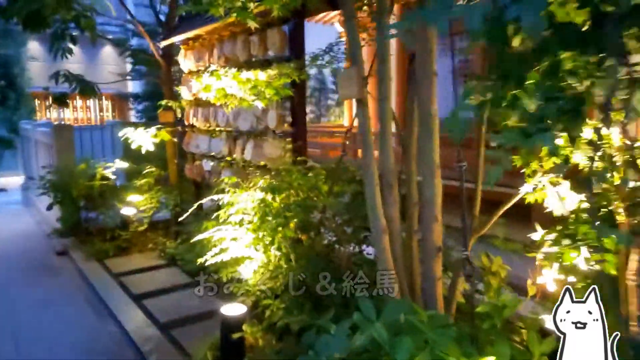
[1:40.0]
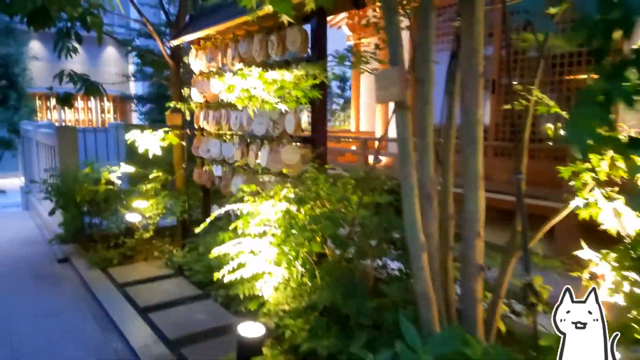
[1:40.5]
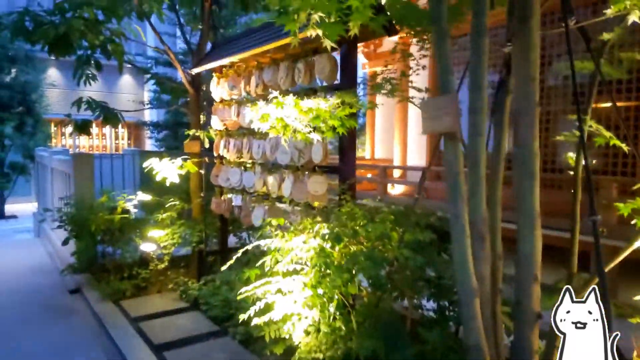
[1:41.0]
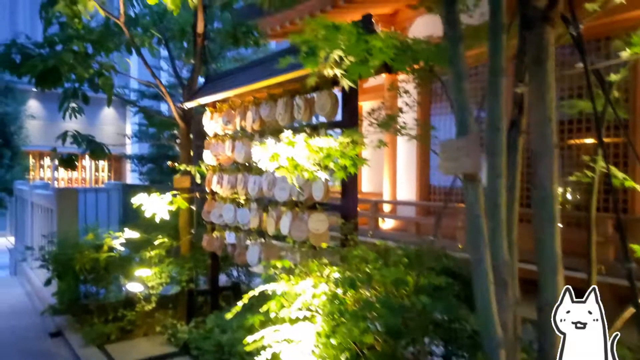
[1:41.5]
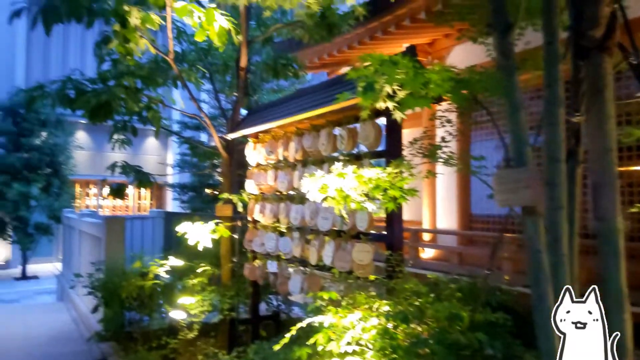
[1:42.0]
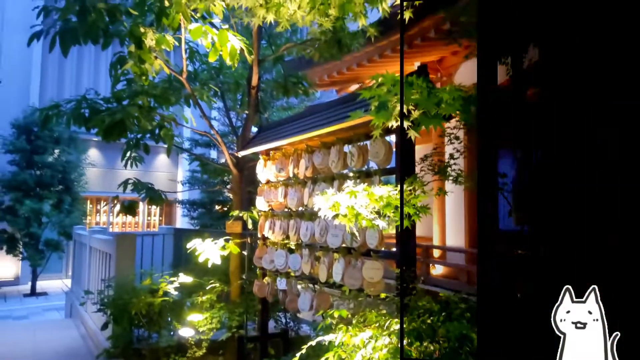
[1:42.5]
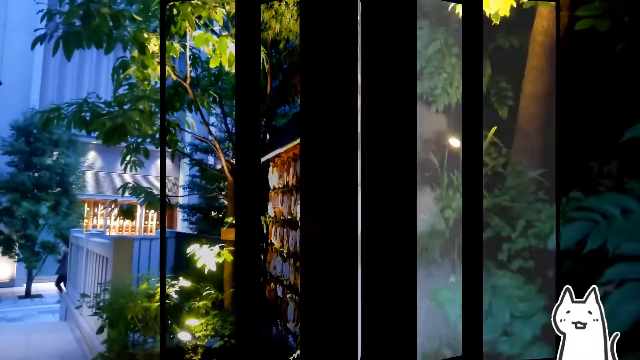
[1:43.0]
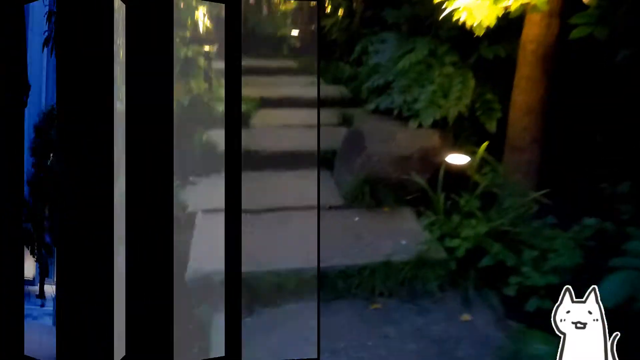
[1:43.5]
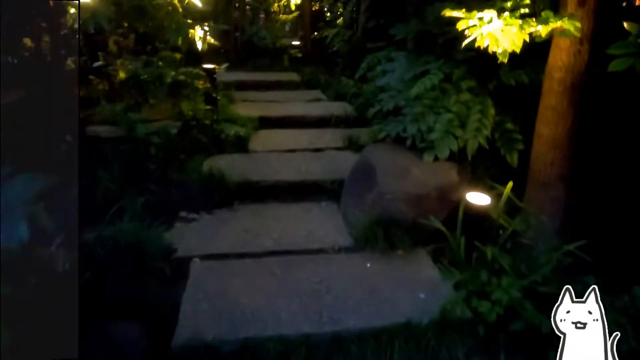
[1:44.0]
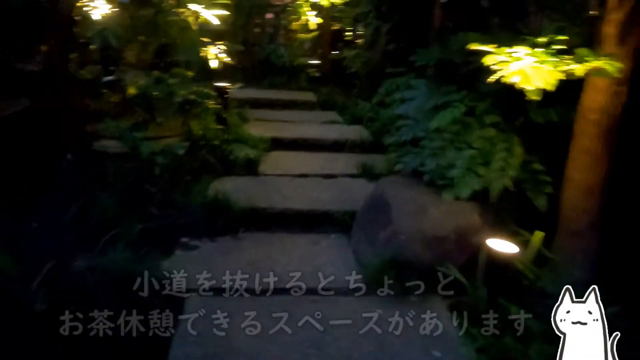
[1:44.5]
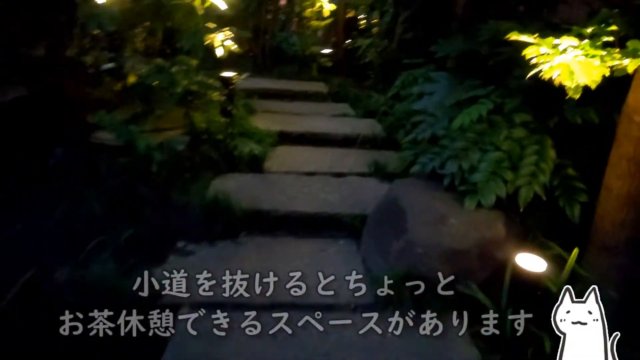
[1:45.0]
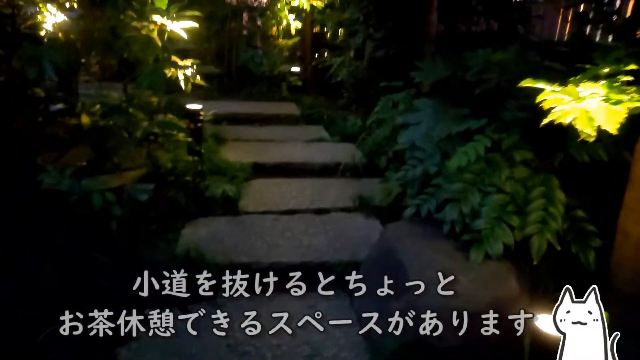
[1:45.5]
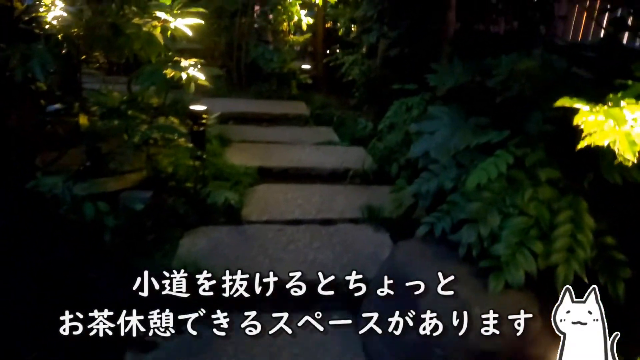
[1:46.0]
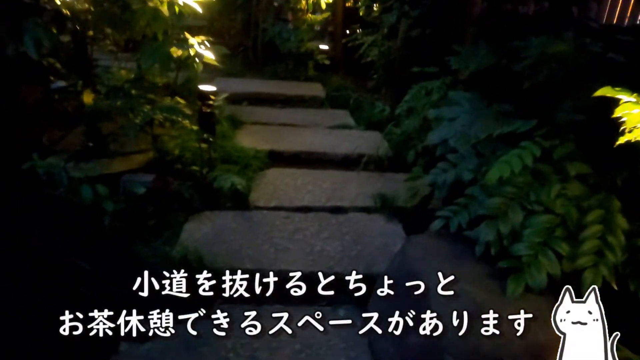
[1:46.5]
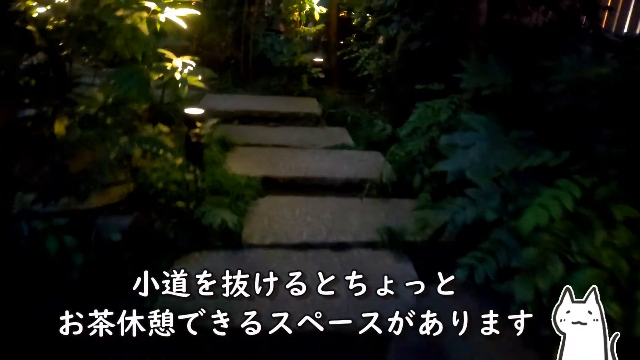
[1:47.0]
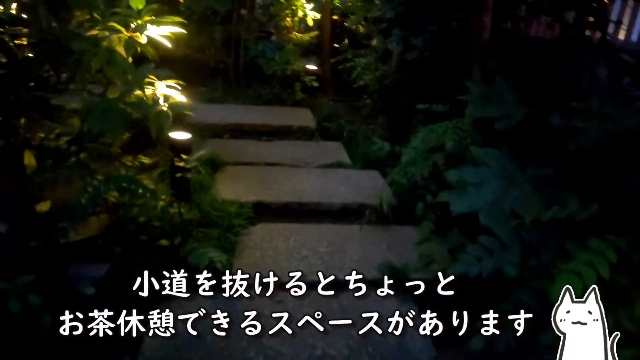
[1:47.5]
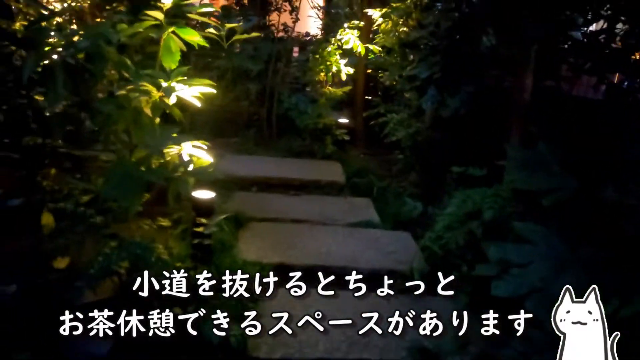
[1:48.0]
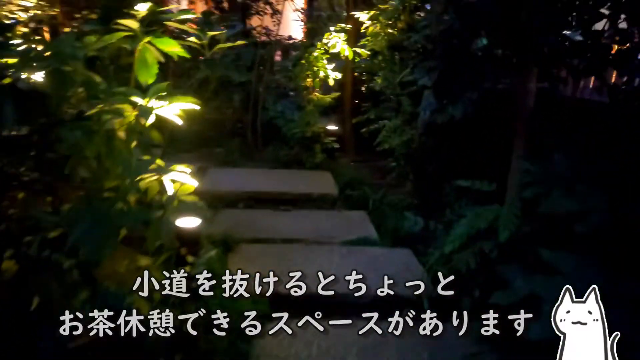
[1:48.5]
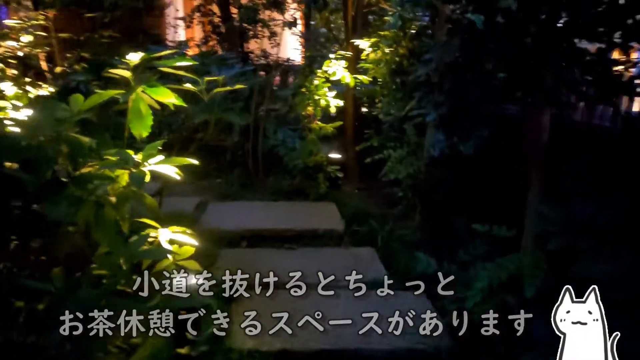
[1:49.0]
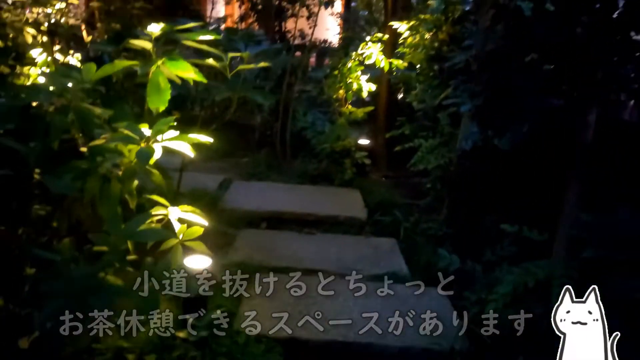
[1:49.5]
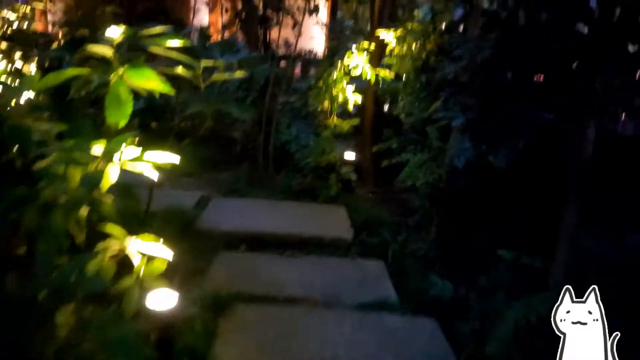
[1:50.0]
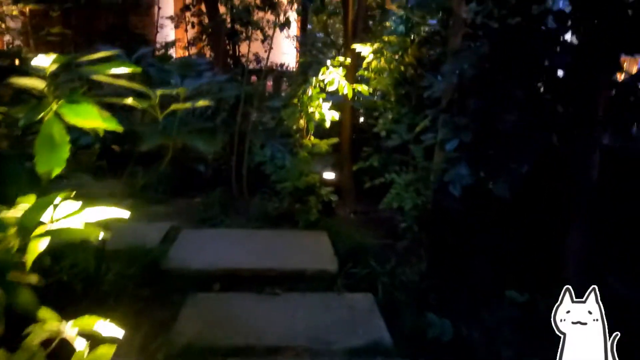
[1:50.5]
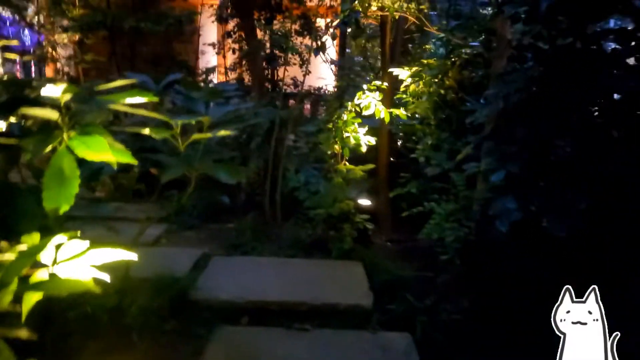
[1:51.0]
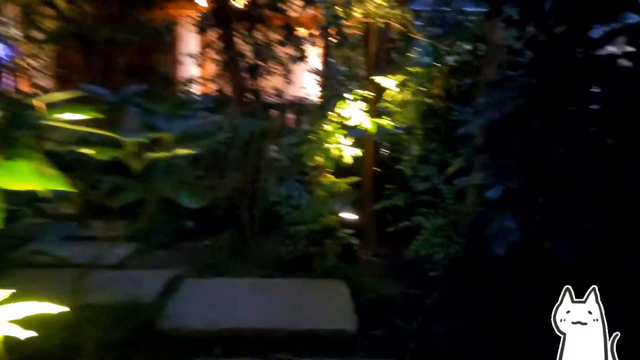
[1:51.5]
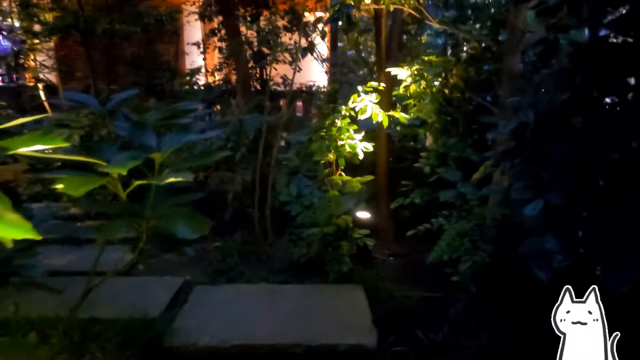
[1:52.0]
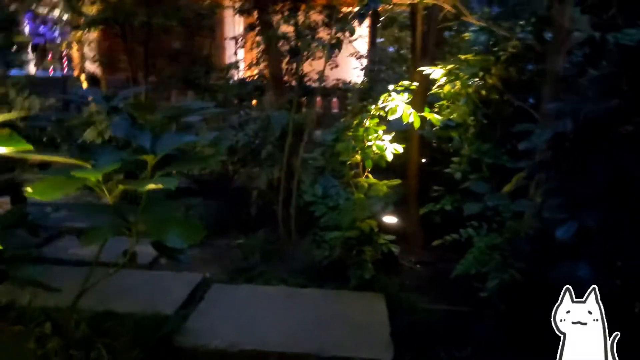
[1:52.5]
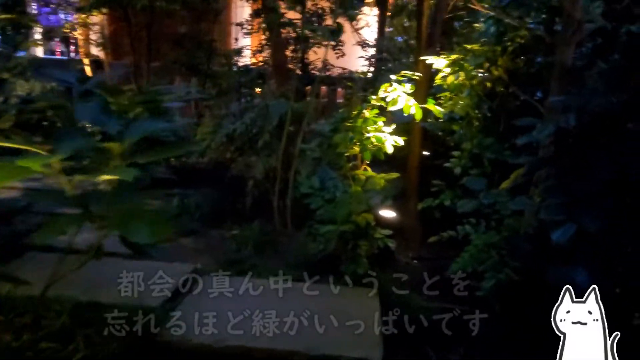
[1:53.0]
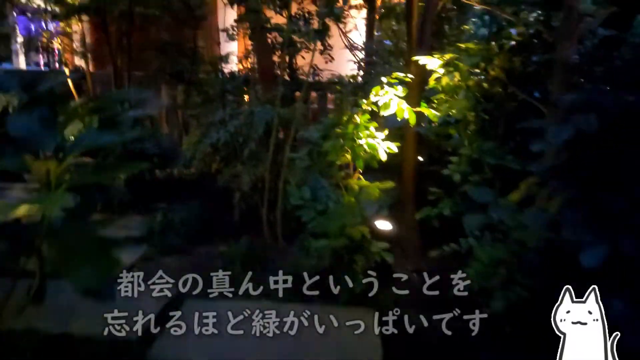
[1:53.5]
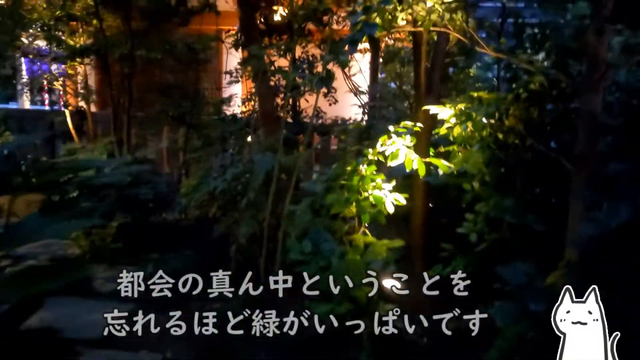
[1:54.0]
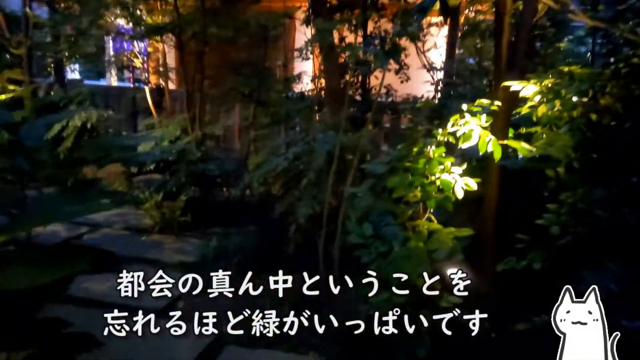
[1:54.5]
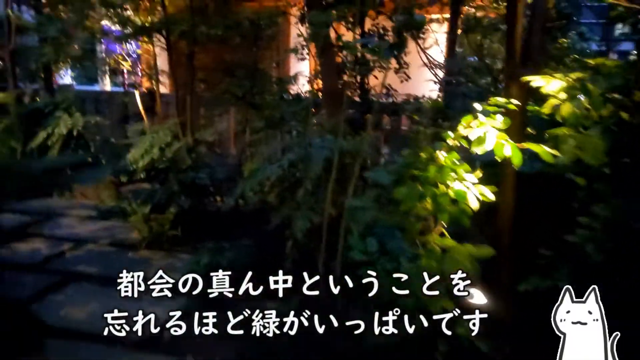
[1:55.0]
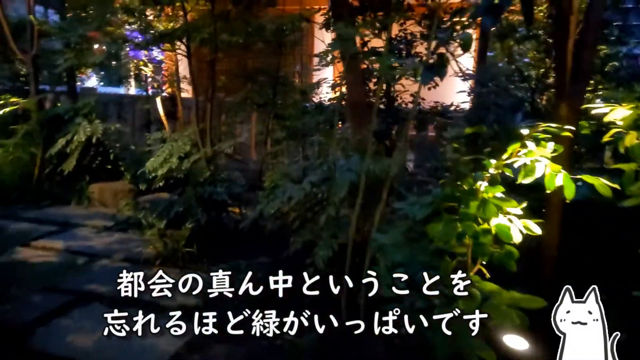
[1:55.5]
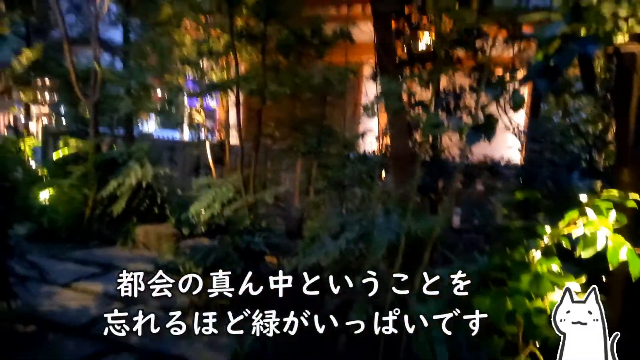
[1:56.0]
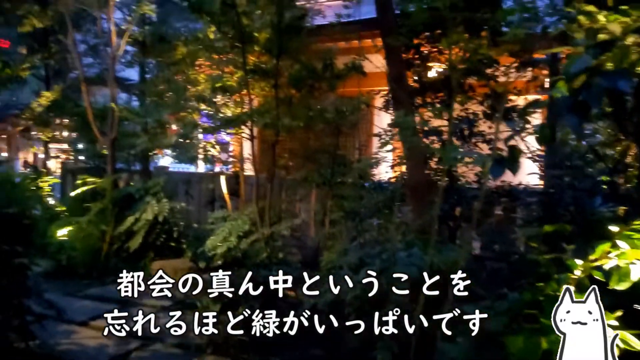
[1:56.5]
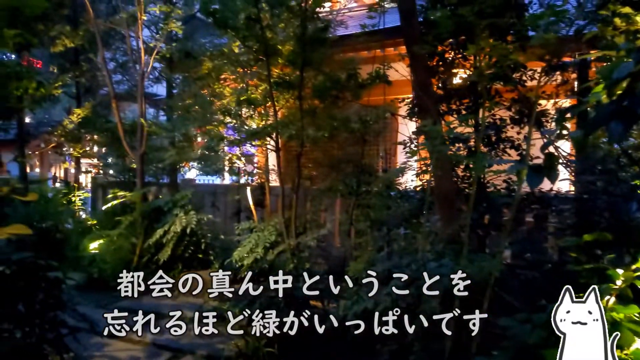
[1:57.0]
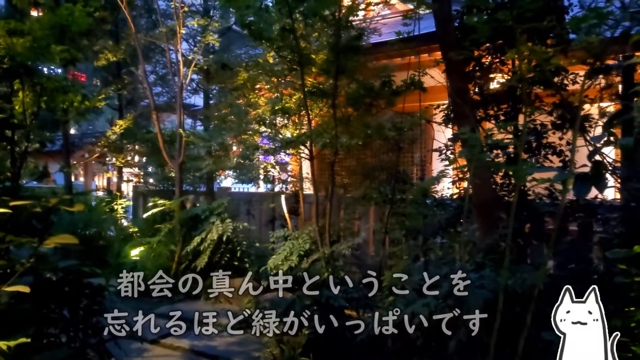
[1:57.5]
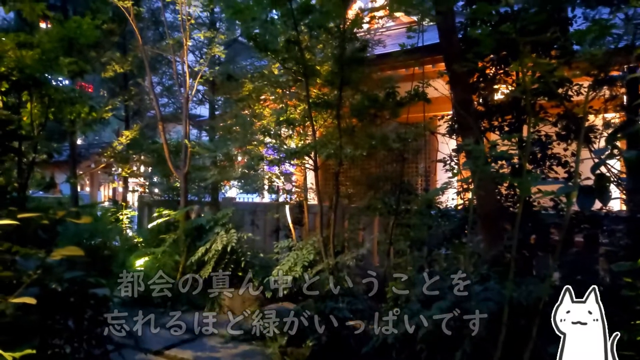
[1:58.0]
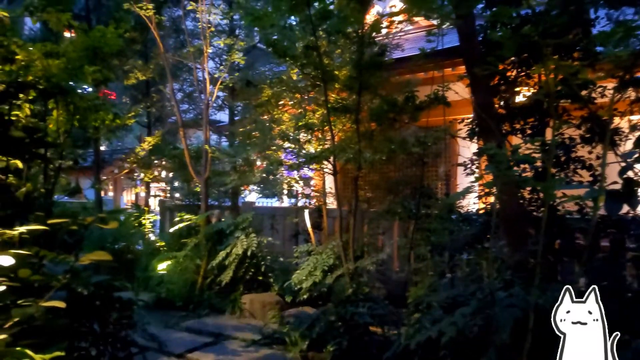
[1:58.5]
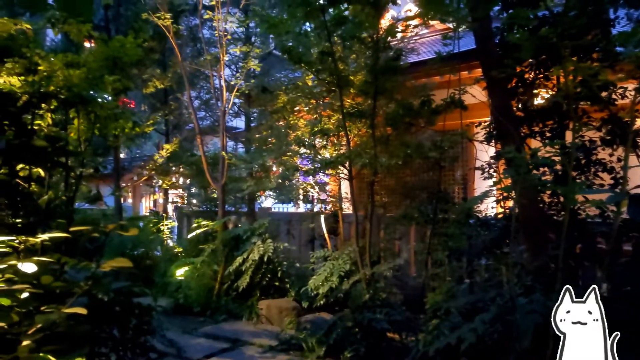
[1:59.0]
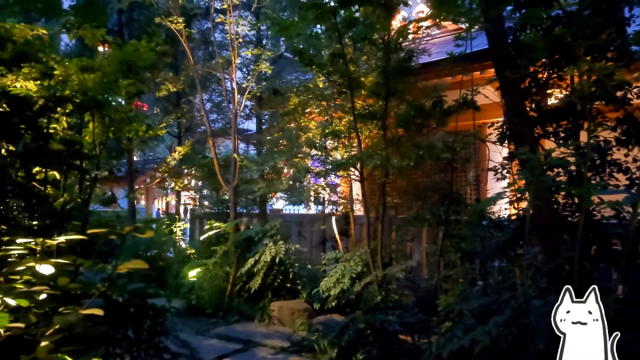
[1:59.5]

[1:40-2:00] The view takes a last look at the left side of the gazebo and appears to follow a trail around it. Stones have been placed in a path to make a trail around the gazebo. There is a lot of shrubbery, bushes and trees, with electrical lighting placed in the area full of shrubs, and many buildings surround the gazebo. The trail is made of very large, thick stones approximately four feet by three feet and probably about eight inches high; the stones are not touching and are maybe four to six inches apart. The observer follows the trail around the perimeter of the gazebo.